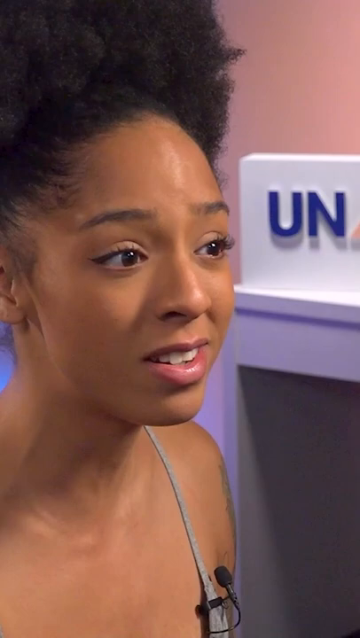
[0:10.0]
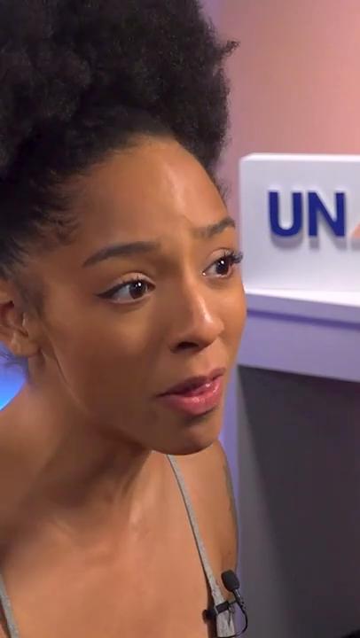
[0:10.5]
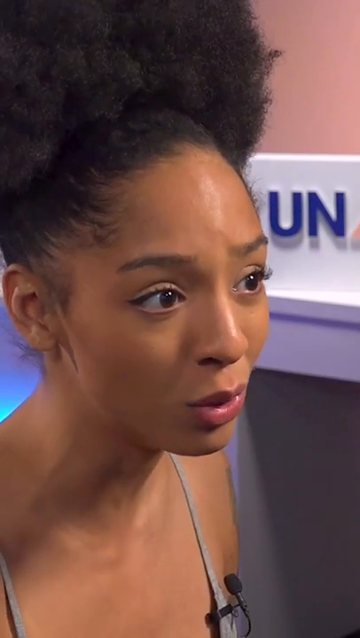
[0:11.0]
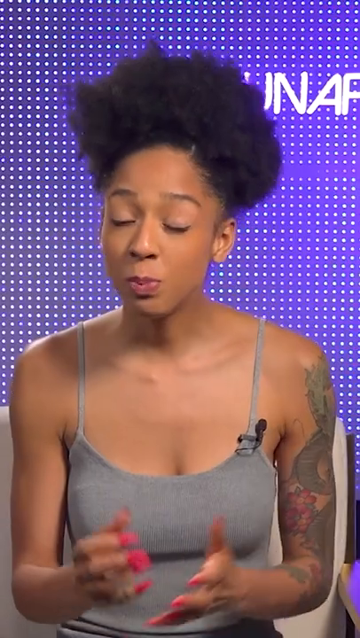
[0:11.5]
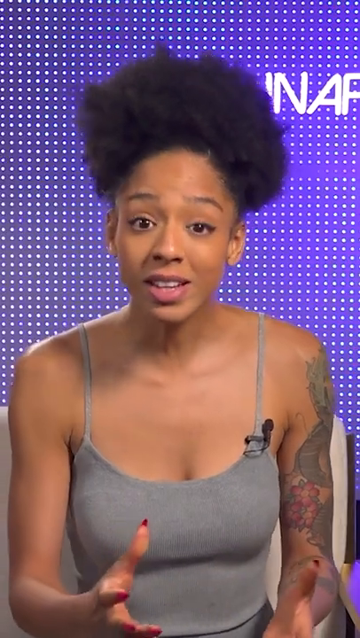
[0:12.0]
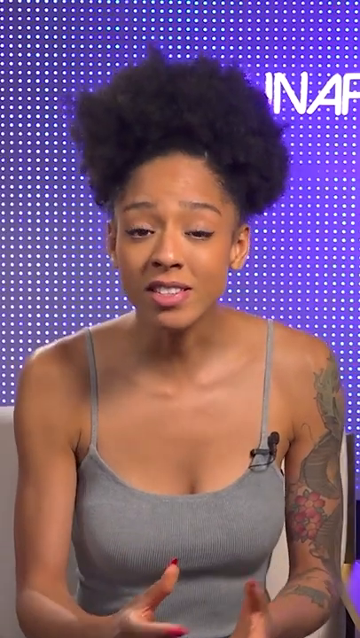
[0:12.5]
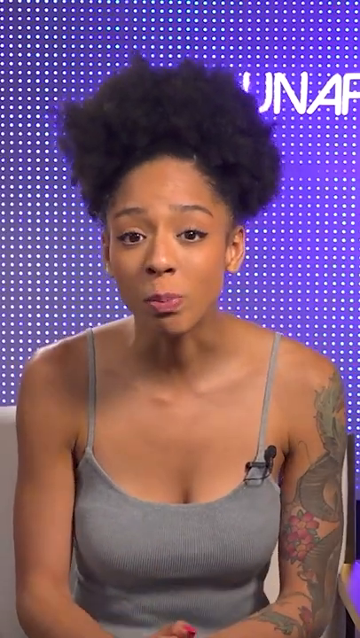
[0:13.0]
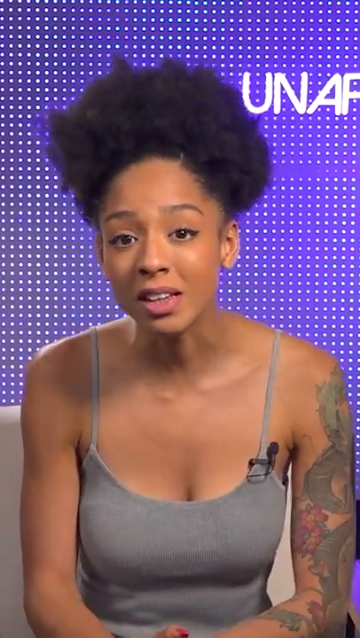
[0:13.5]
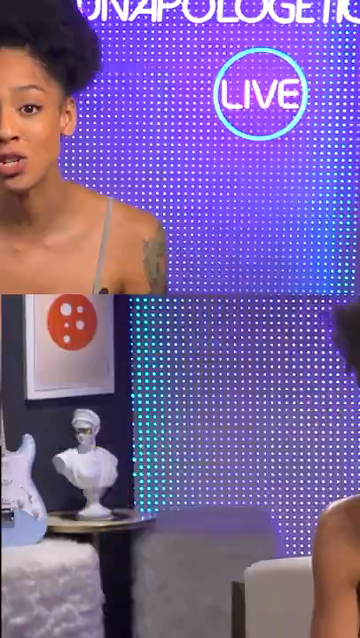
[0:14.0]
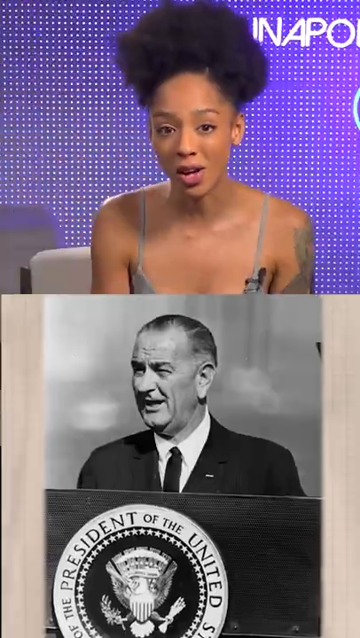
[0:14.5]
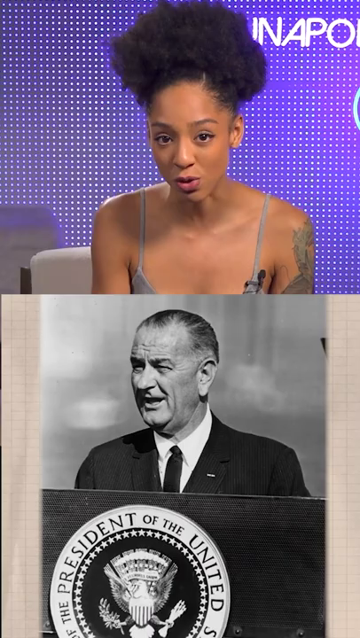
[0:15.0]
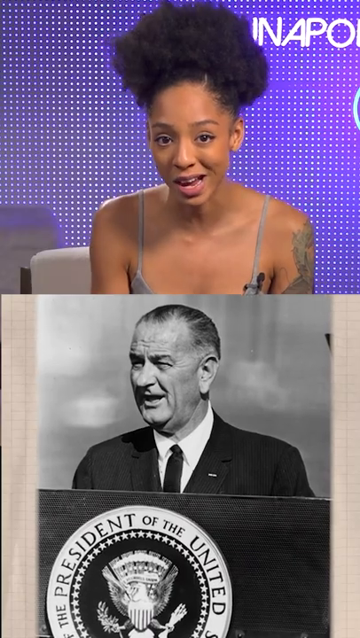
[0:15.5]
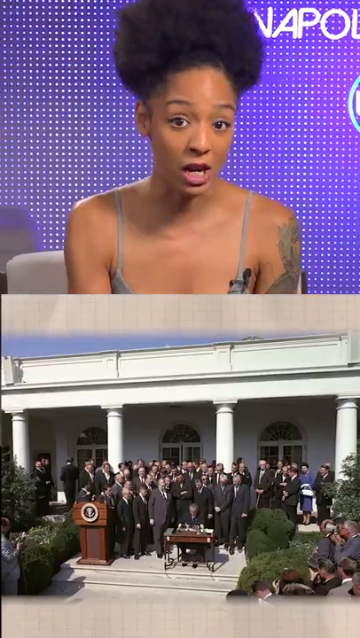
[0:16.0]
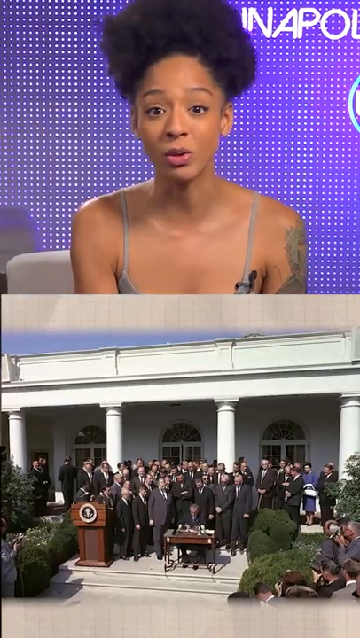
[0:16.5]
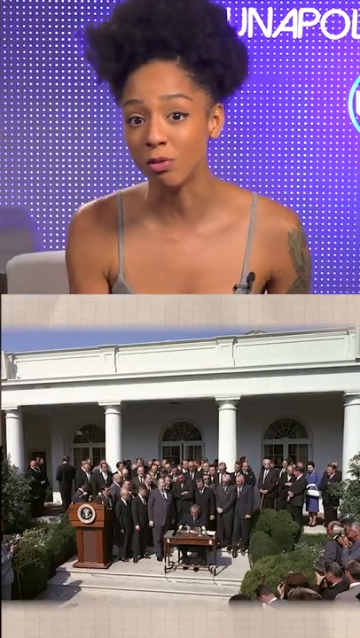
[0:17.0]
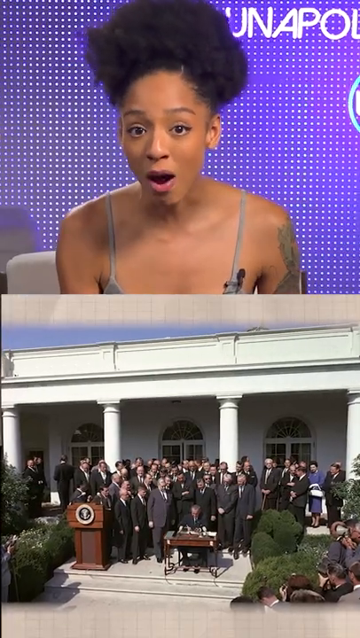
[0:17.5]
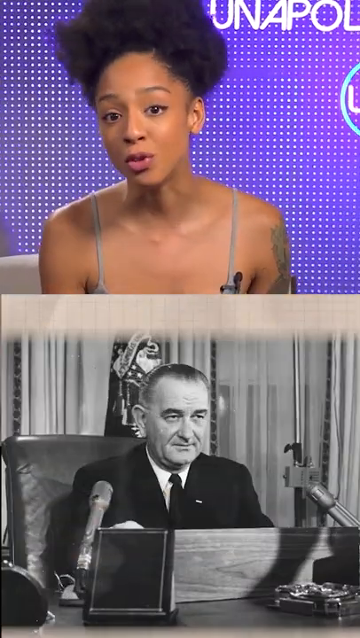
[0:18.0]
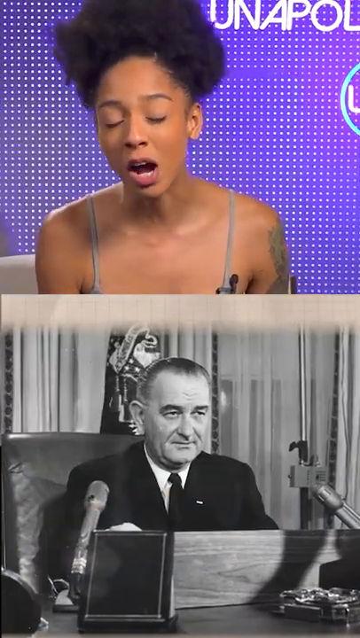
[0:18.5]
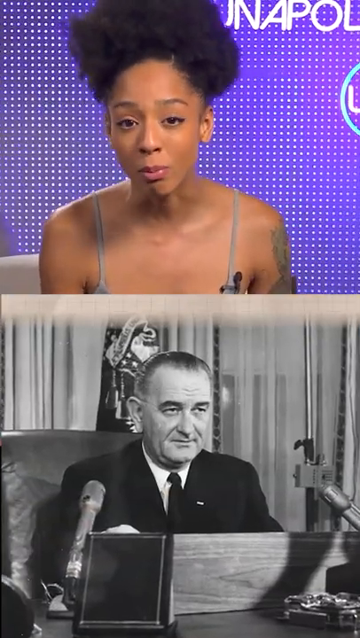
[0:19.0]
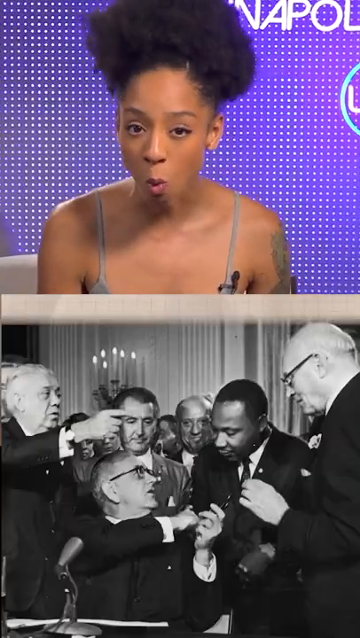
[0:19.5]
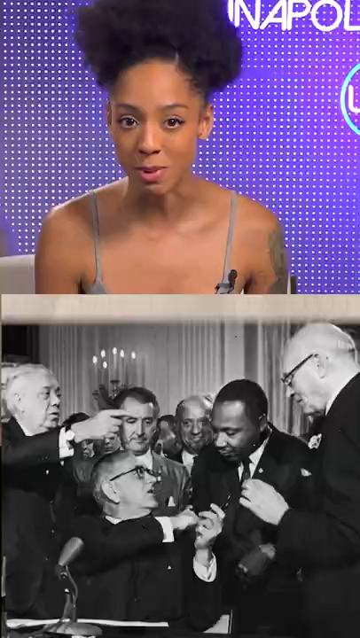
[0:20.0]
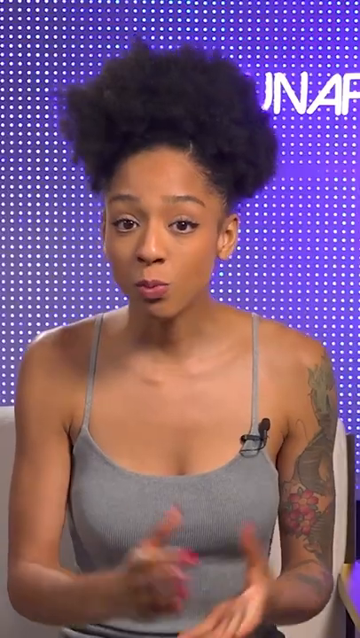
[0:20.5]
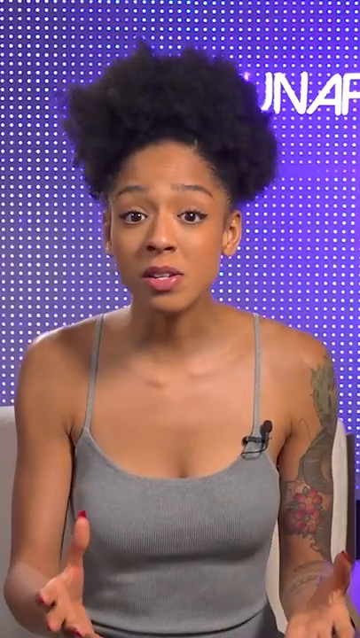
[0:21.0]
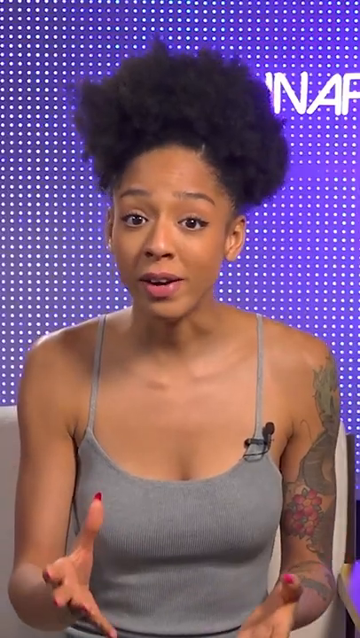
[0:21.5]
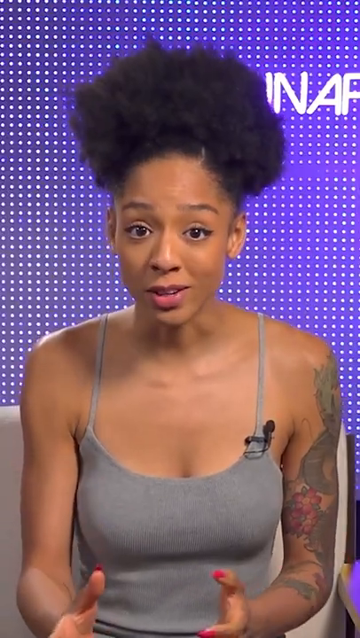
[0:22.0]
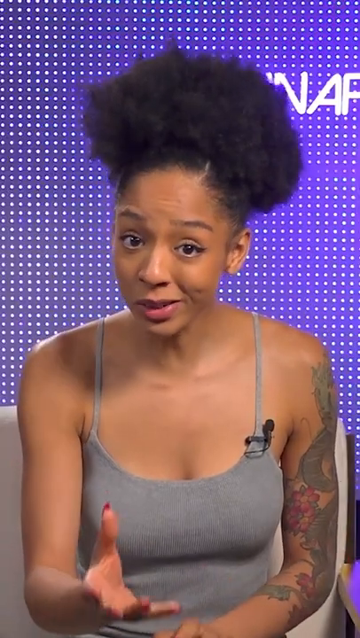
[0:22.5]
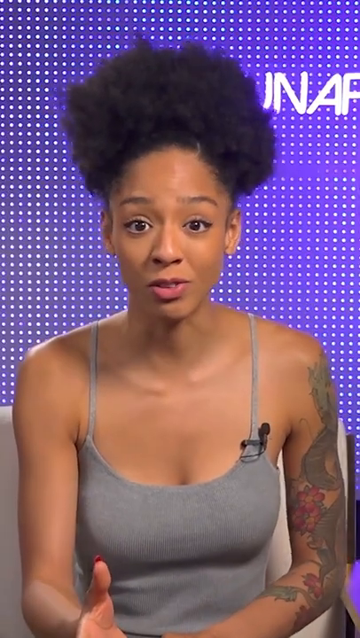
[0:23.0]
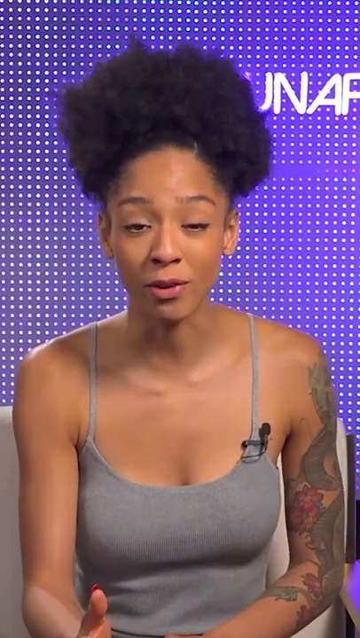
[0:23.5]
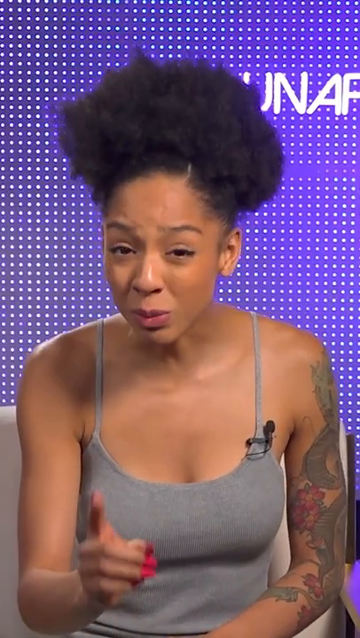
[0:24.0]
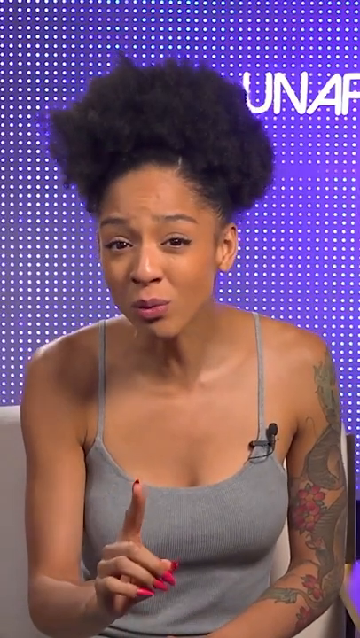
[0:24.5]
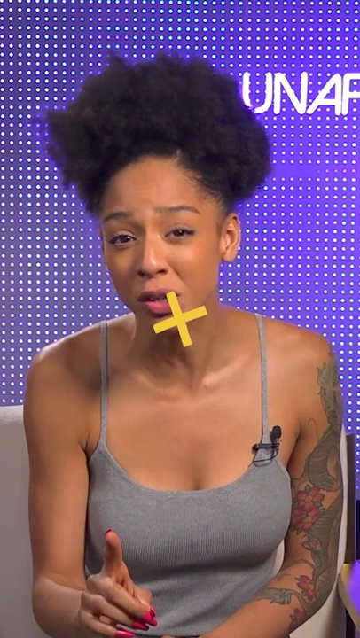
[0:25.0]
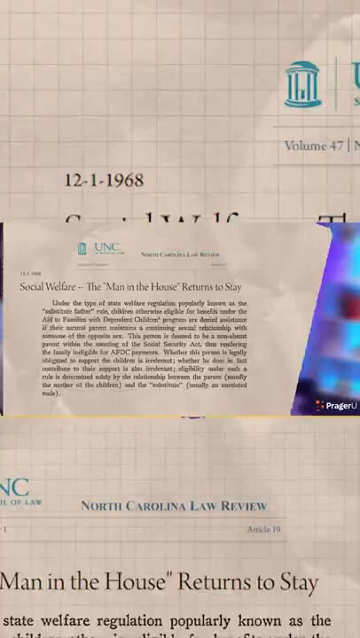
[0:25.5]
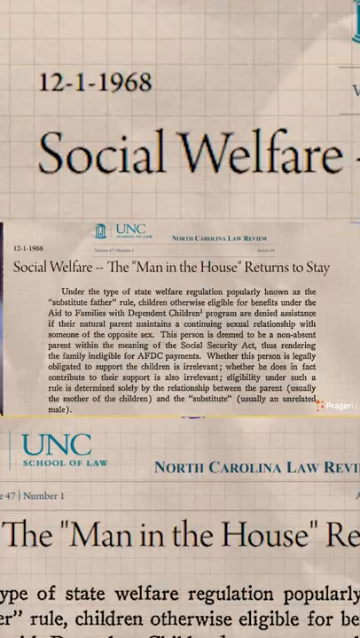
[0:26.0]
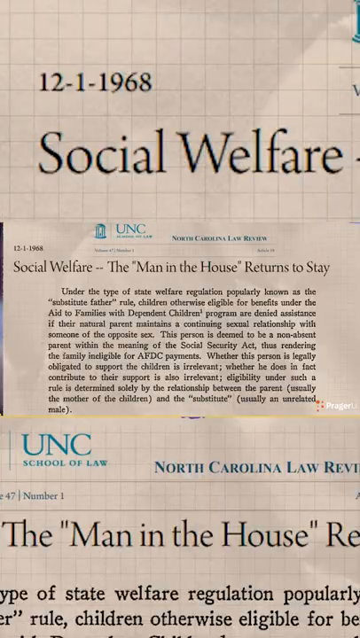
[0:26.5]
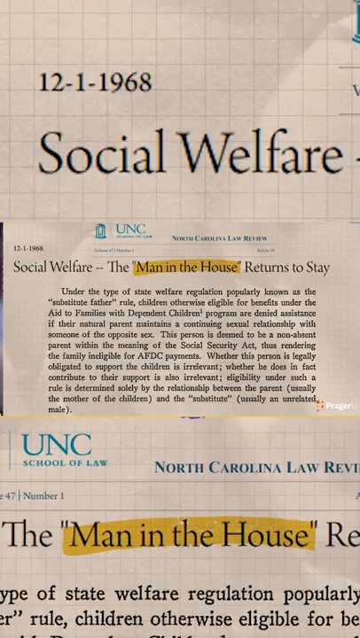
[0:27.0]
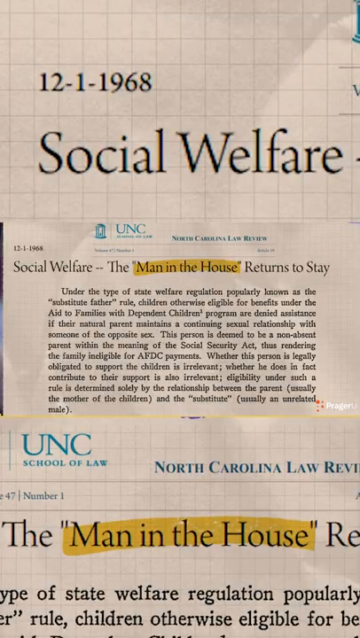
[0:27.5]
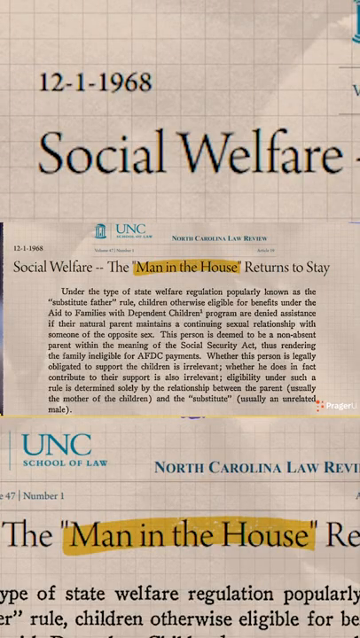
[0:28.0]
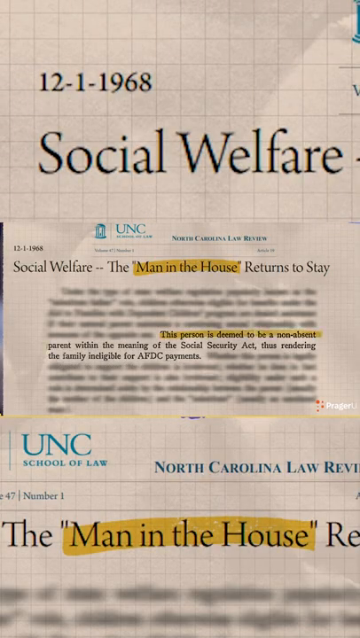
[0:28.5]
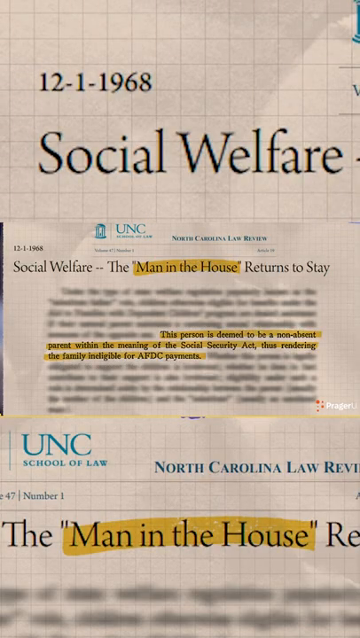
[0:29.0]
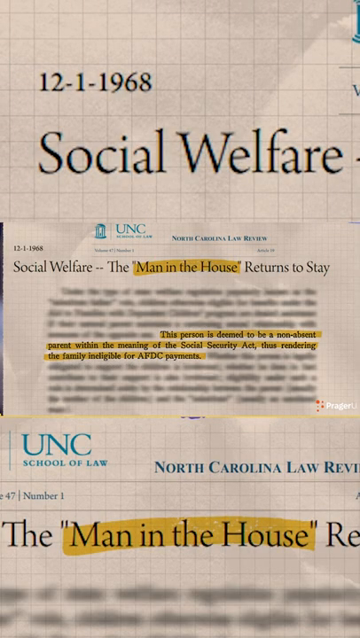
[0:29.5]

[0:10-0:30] The young Black woman in the gray tank top, with tattoos up and down her left arm and a microphone on her left shoulder, continues. A news headline appears, apparently from the University of North Carolina Law School. She shows a picture of Lyndon Johnson shaking hands with Martin Luther King, probably along with other Democrats; to the right of Martin Luther King is apparently a very young Everett Dirksen. A headline from Social Welfare reads "The man in the house." She may be a student.